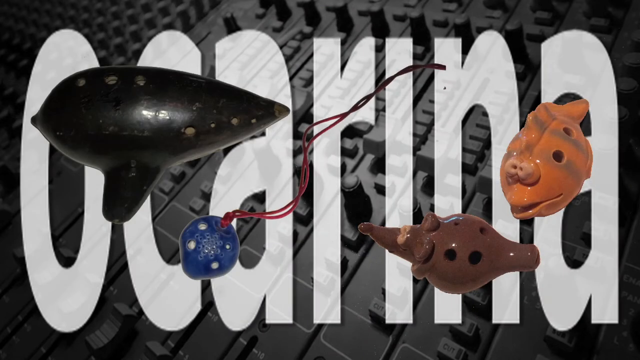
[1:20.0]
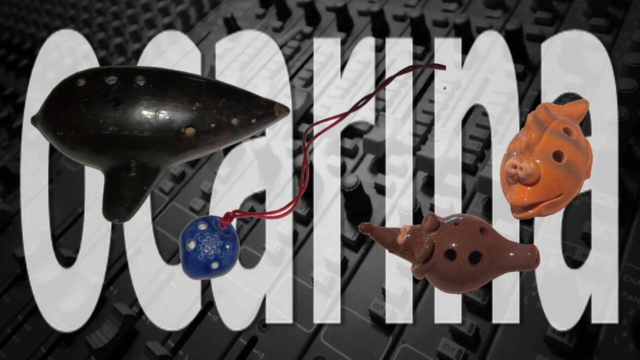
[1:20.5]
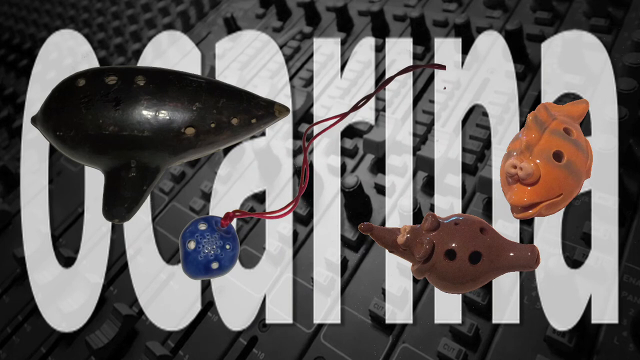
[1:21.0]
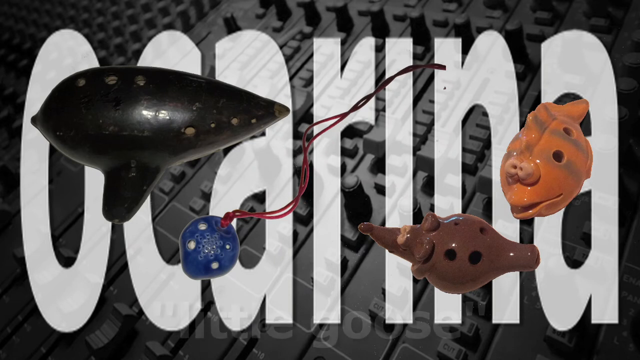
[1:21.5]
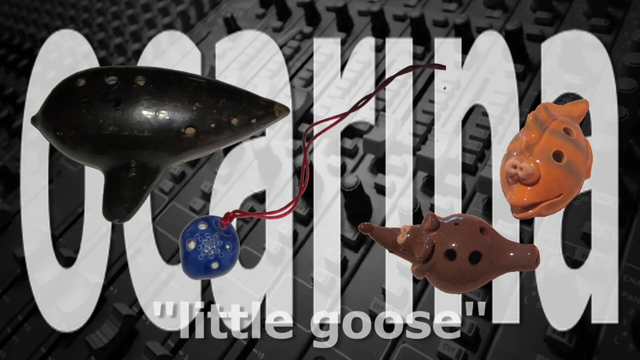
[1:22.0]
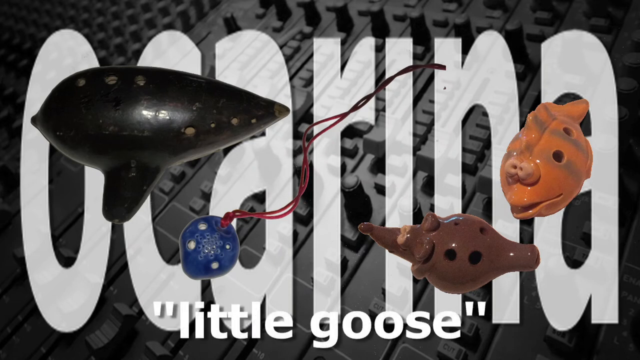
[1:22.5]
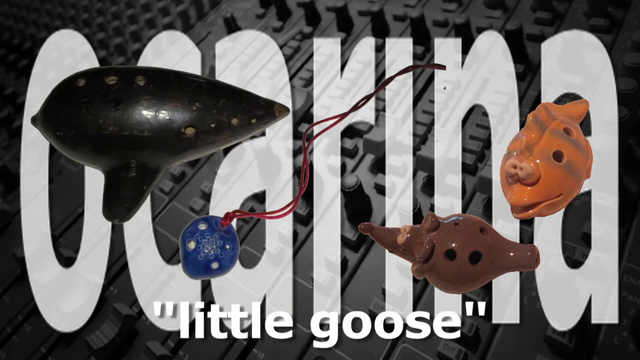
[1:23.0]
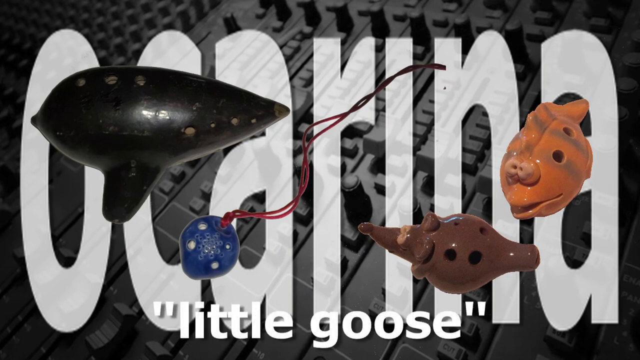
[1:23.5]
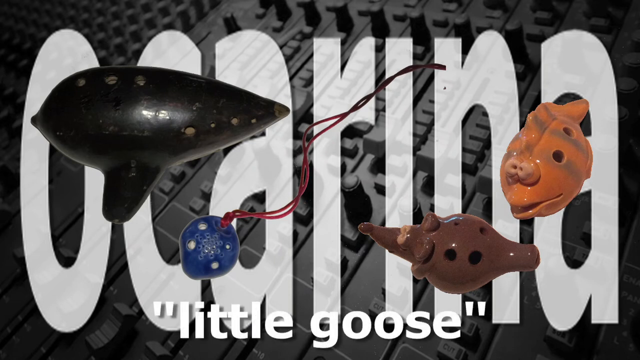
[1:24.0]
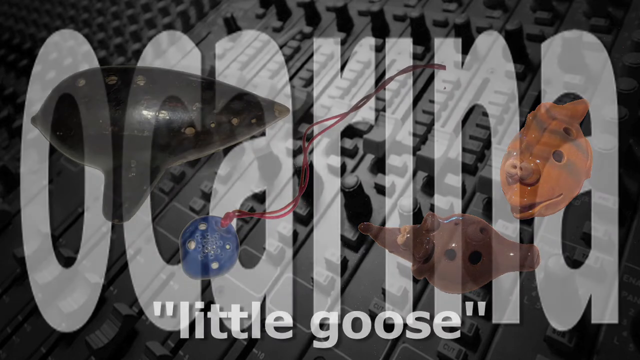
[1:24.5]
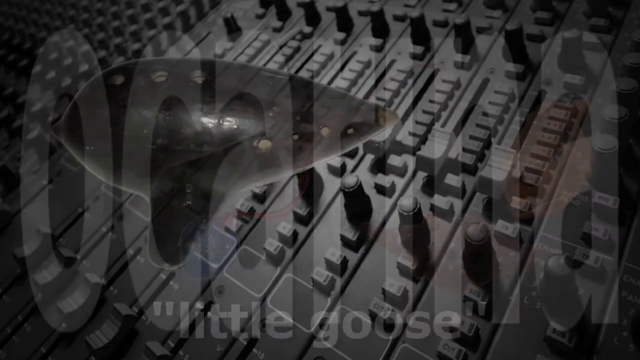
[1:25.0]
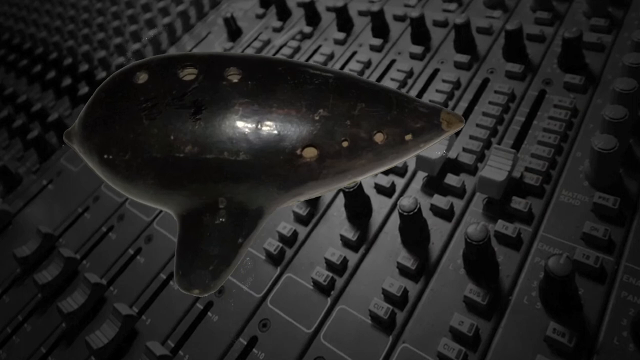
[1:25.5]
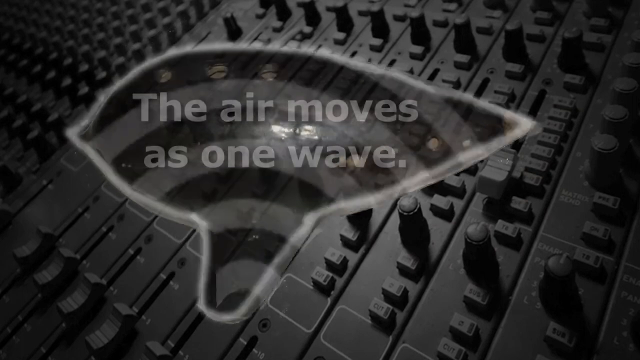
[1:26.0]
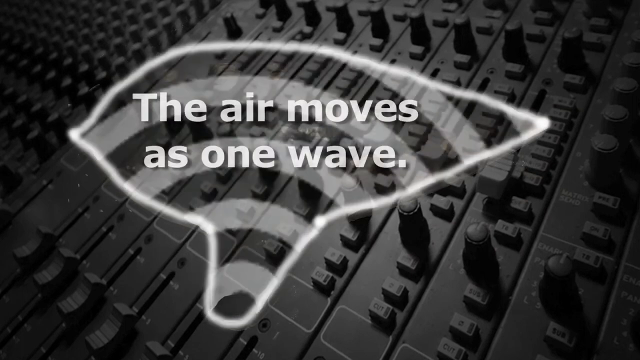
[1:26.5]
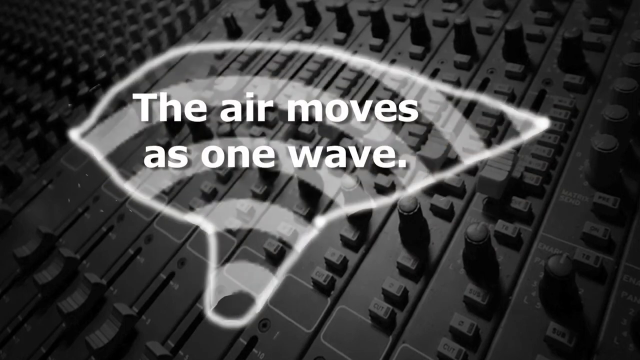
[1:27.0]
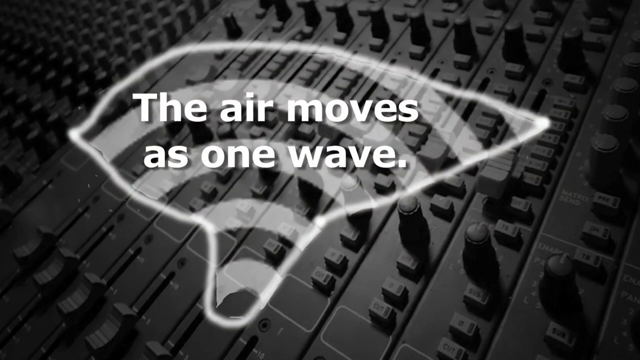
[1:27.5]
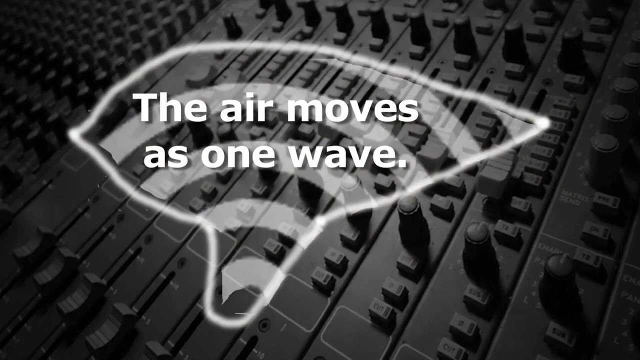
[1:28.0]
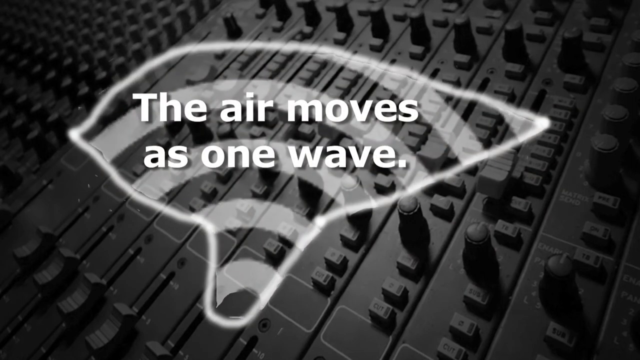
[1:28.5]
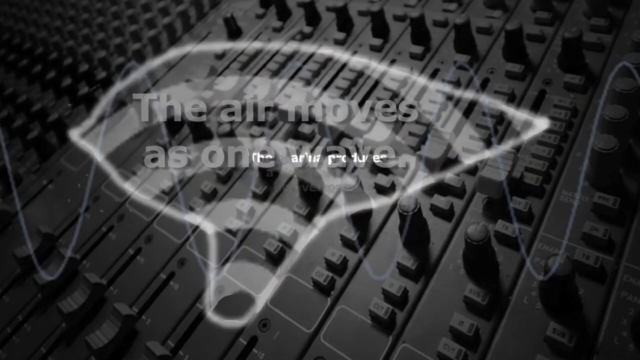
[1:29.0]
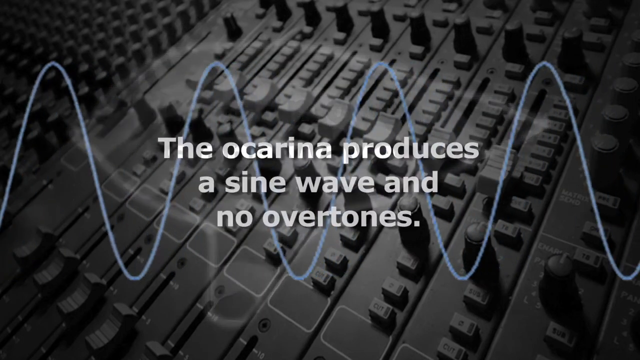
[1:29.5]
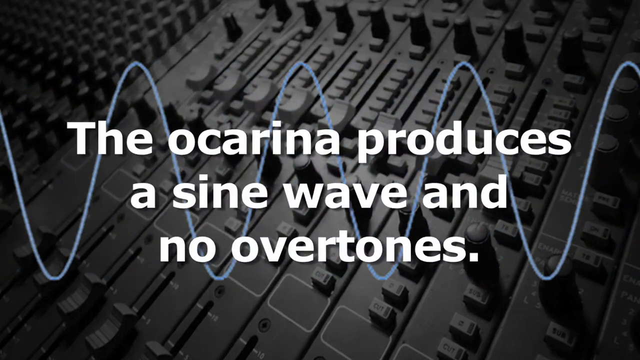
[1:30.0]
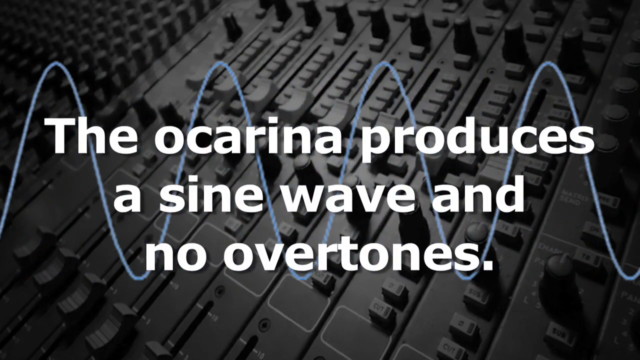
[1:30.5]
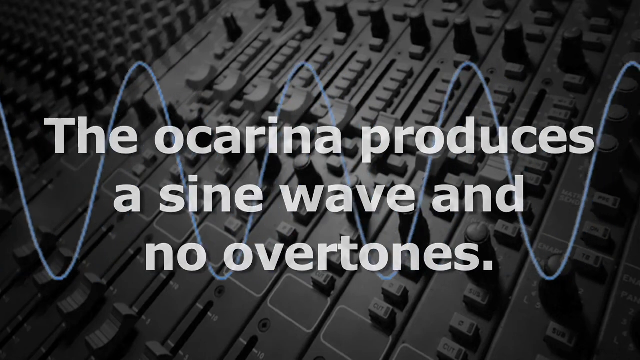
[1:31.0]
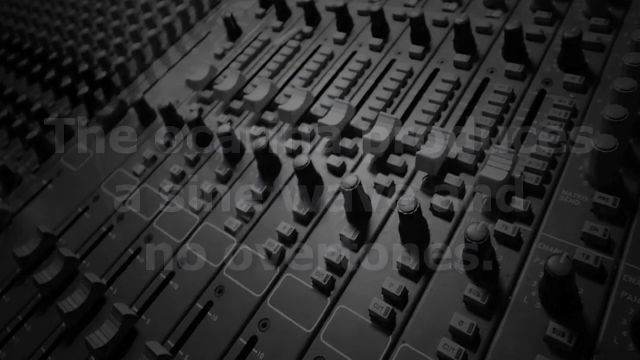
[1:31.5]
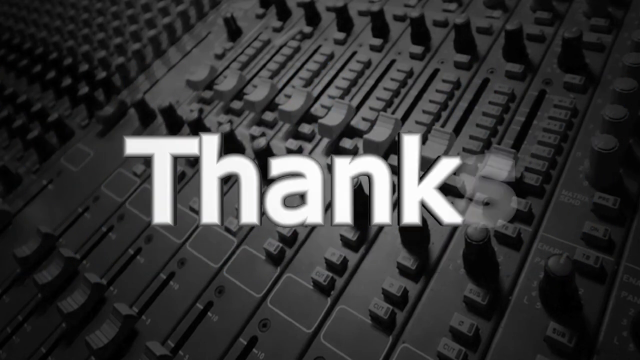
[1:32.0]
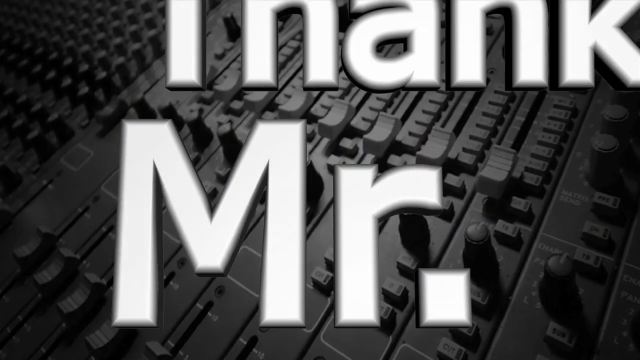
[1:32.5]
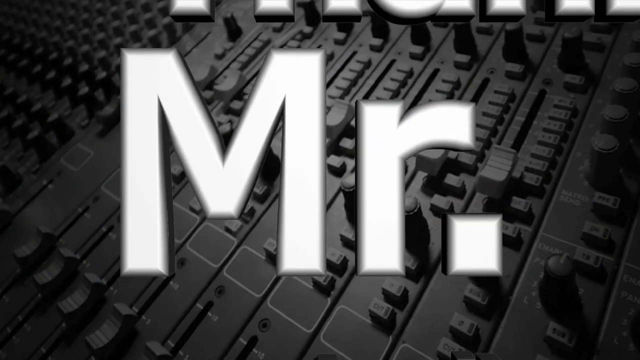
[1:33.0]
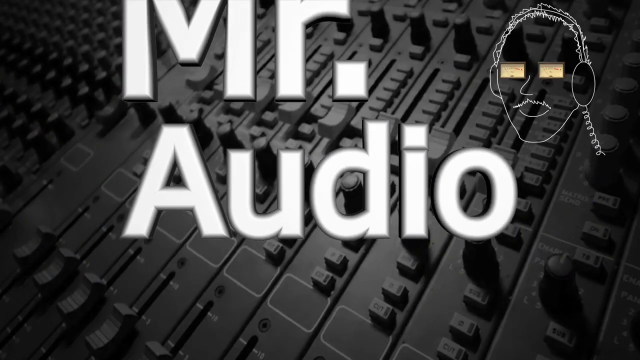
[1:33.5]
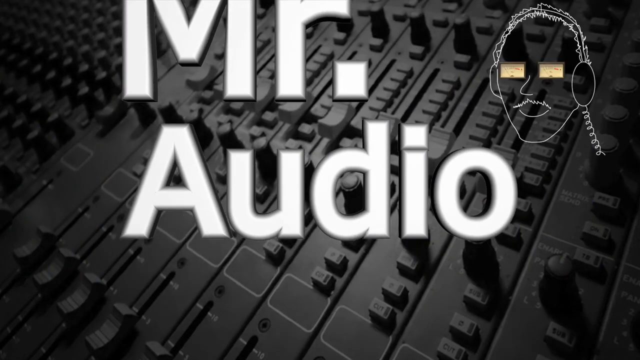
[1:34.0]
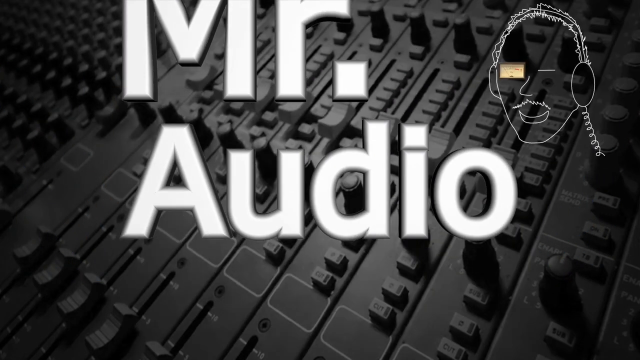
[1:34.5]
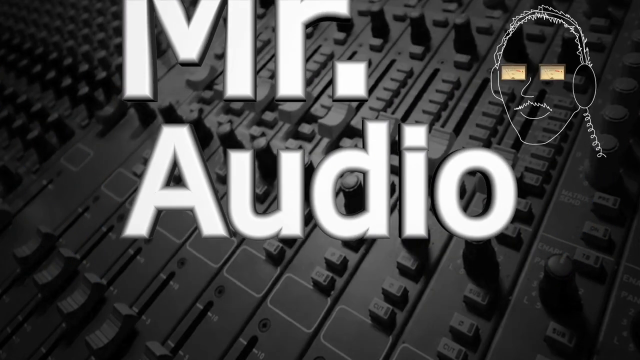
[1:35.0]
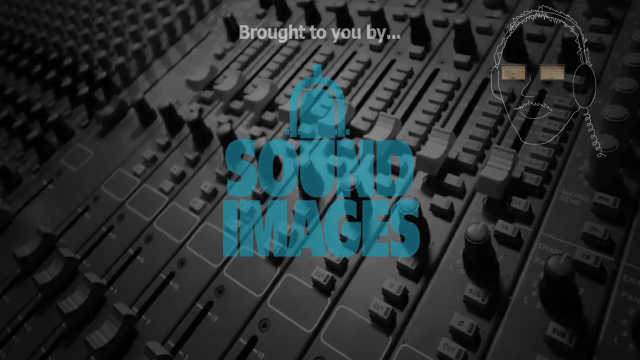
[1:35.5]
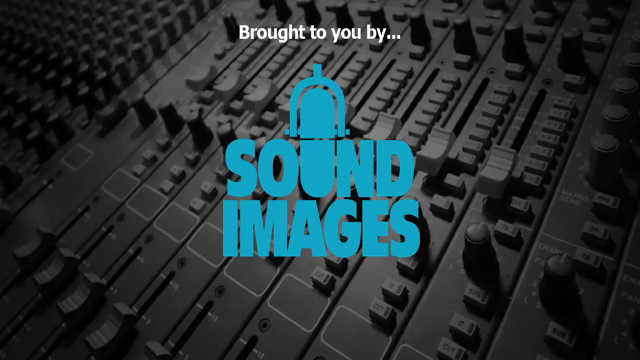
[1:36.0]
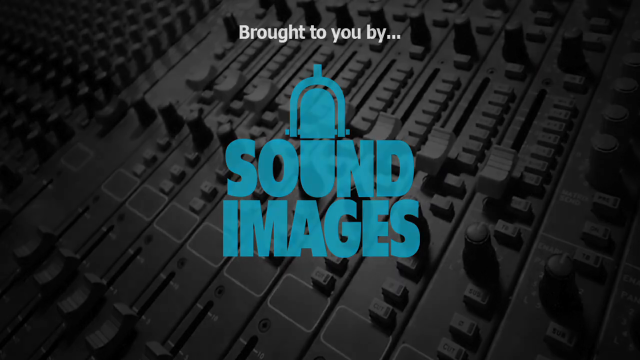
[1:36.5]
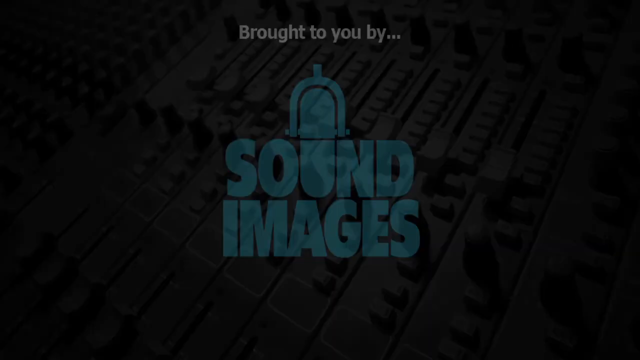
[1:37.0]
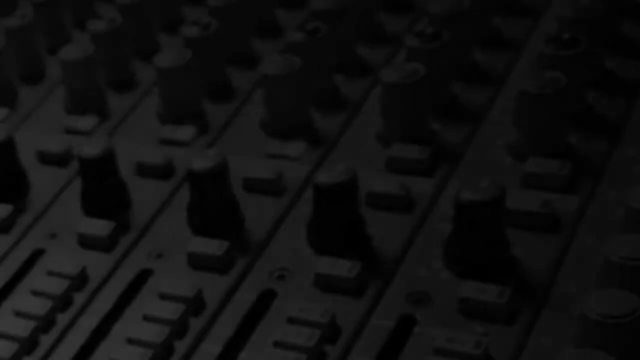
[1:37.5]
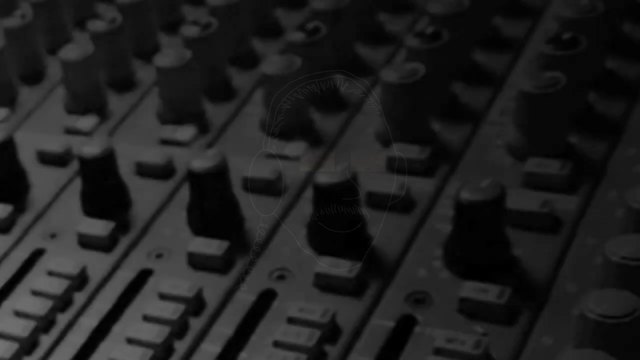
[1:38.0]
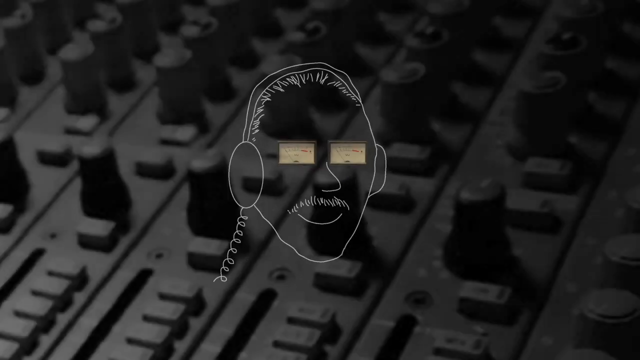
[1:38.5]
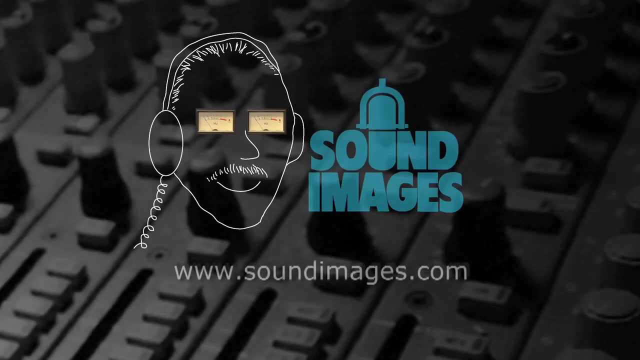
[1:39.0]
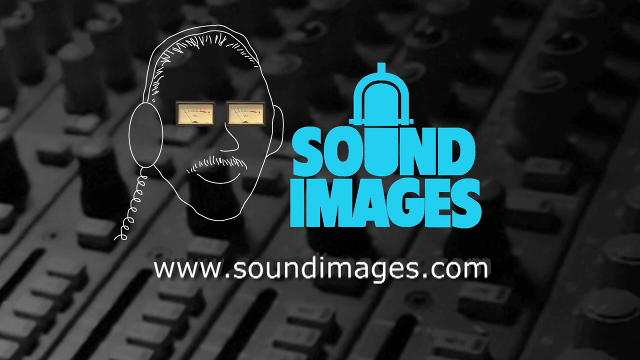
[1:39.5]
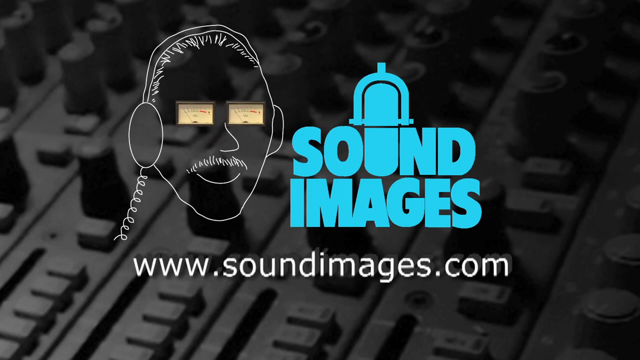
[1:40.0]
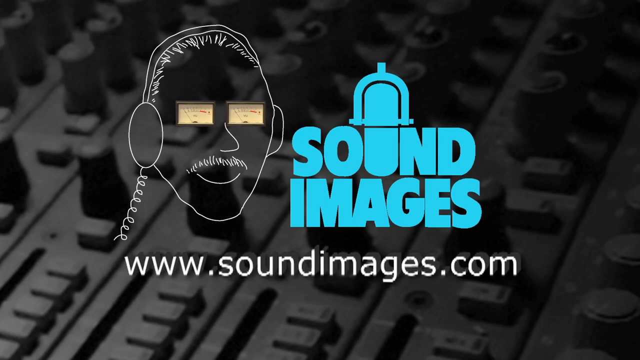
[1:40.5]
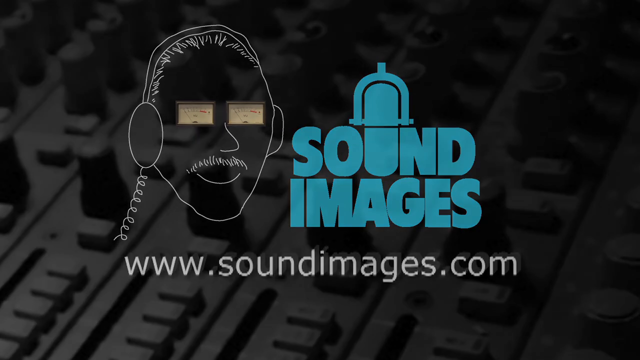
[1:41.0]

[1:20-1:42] "Ocarina" appears in large white text that kind of takes up the entire frame. Various ocarinas are then shown: a black one in the top left, and orange, brown and blue ones. The view focuses on the ocarina in the top left and zooms in until it takes up the center of the frame, with curved stripes in the center moving upward. The text "the air moves as one wave" appears in white in the center while the image seems to move closer and further back. Next it reads "the ocarina provides a sine wave and no overtones", with a wavy line moving from right to left across the center. Then stylized text reads "Thanks, Mr. Audio", with the logo on the right: apparently a man whose square eyes are like sound gauges and who appears to have a mustache. He winks his left eye and opens his mouth as if smiling. Then the text reads "brought to you by Sound Images", with "Sound Images" in teal. The logo of the man wearing headphones is shown again, followed by "Sound Images" again.